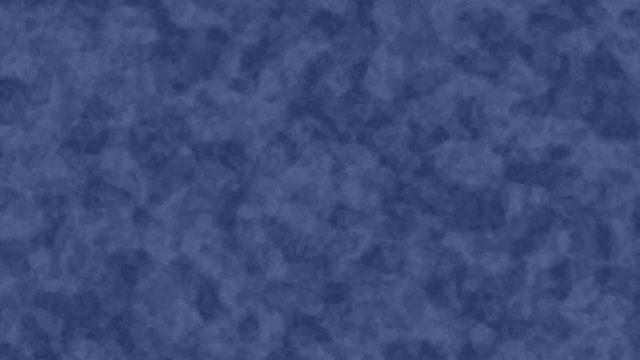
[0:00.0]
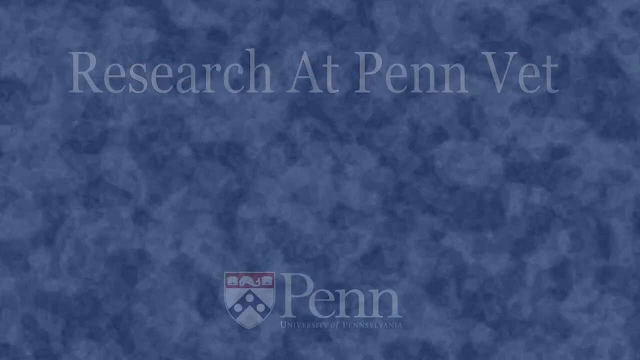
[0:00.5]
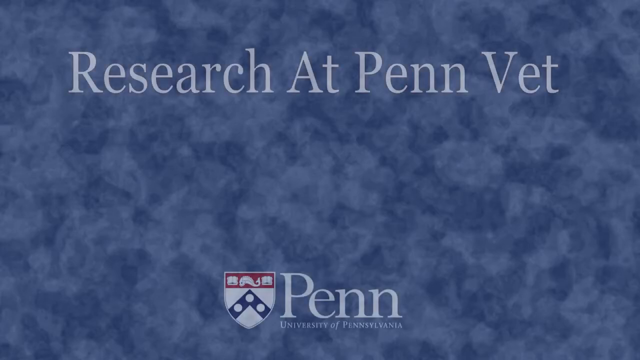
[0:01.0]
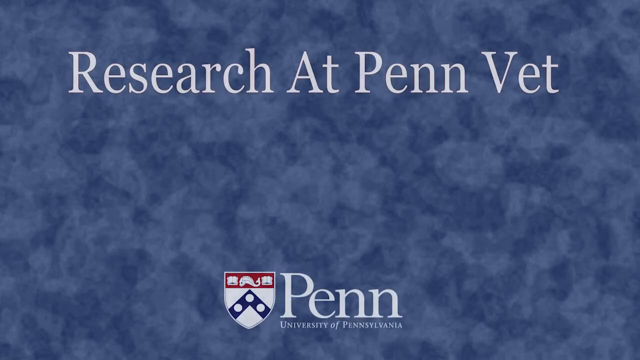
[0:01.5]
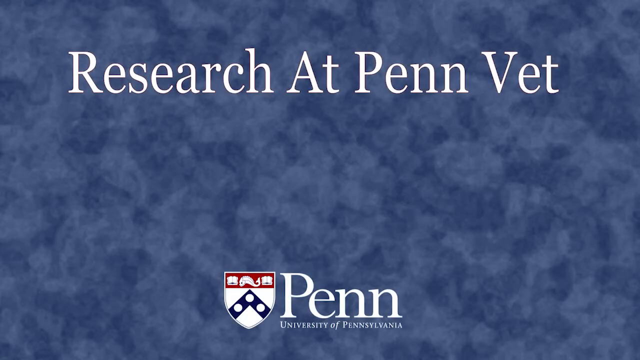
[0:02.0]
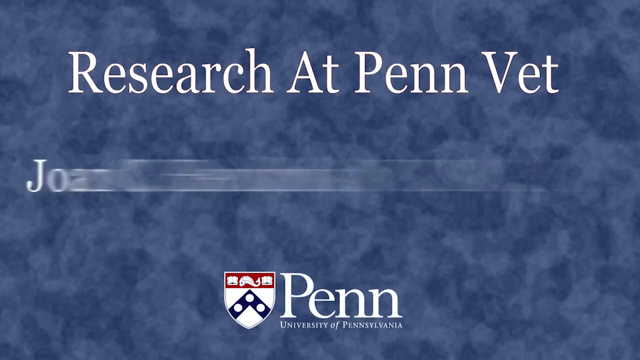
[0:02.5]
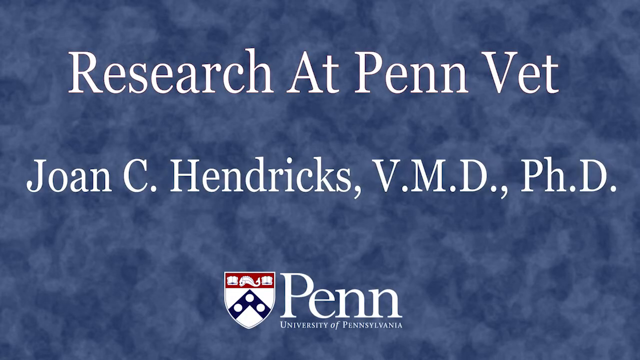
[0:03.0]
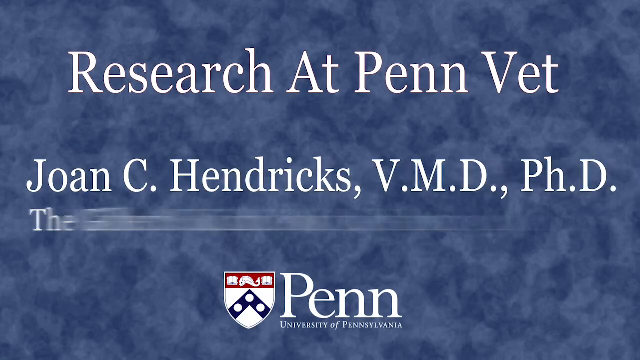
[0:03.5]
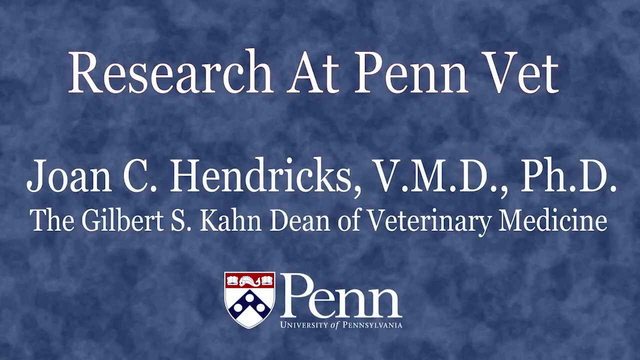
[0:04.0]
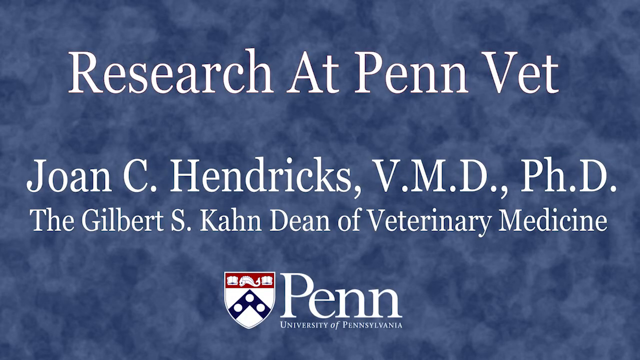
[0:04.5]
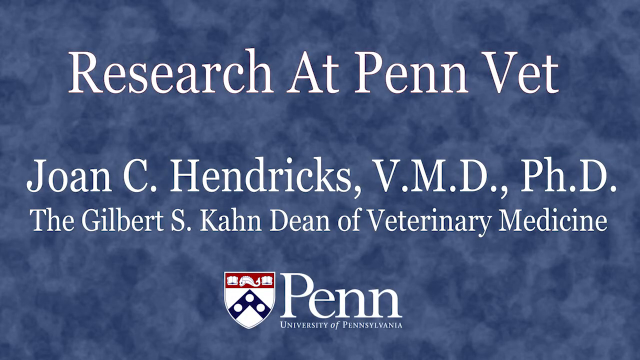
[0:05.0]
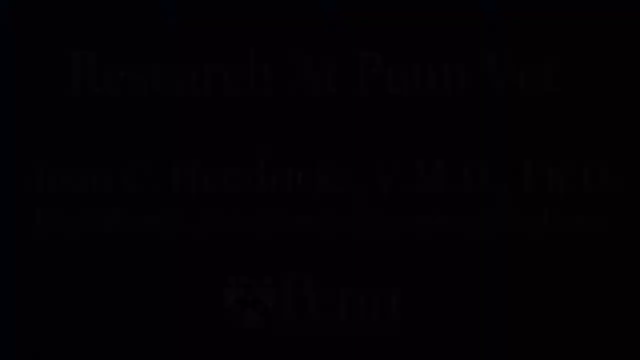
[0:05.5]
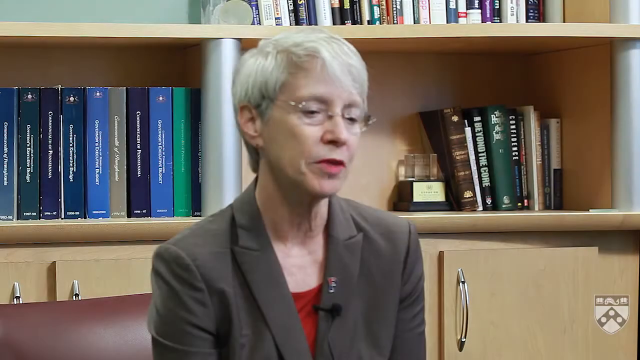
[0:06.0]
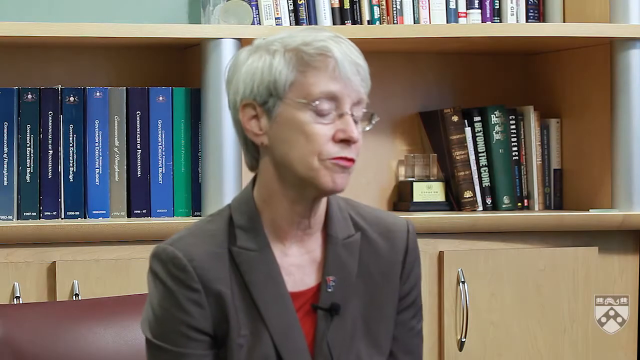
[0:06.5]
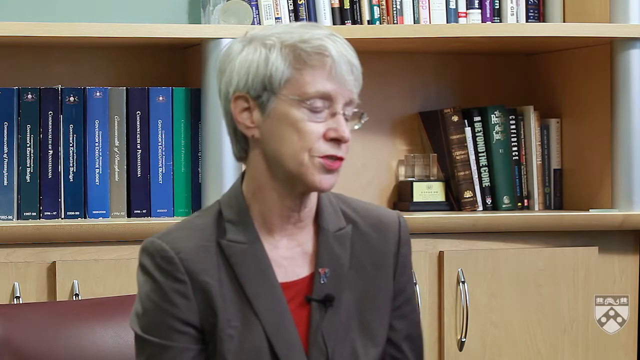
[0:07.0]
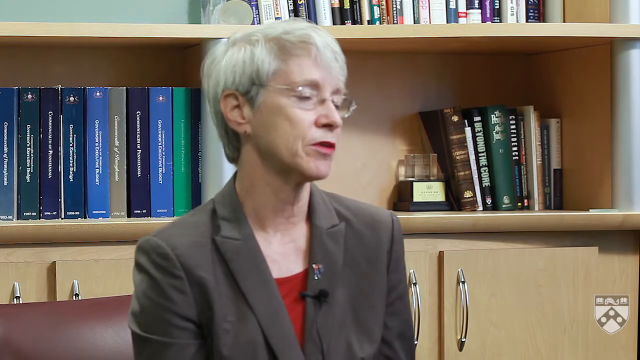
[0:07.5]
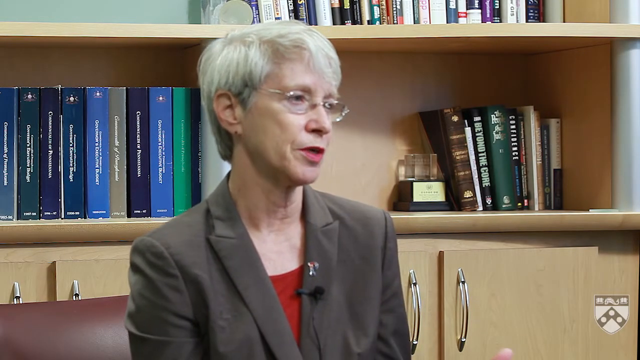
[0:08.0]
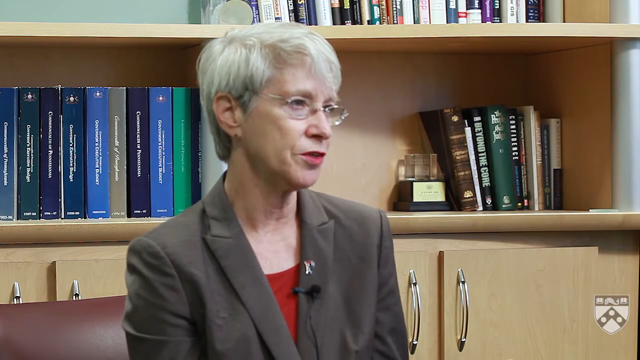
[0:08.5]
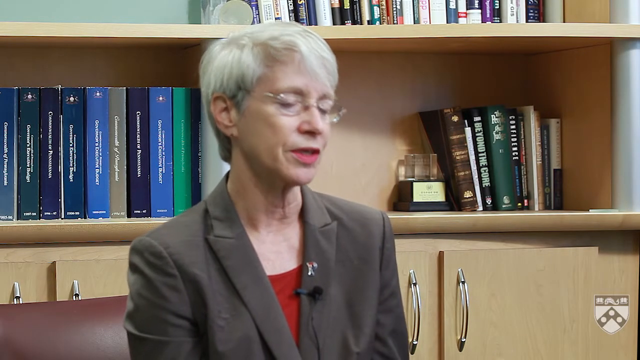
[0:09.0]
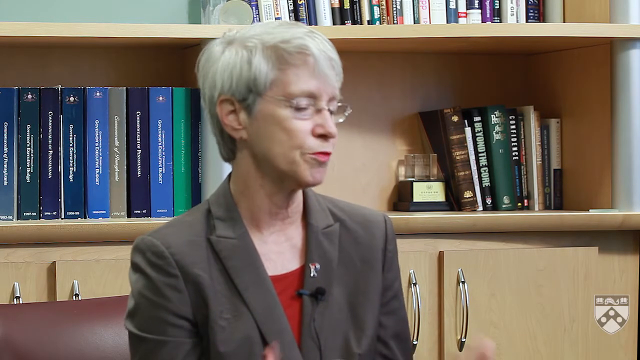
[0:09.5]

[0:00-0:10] The video opens with white words on a blue background that read "Research at Penn Vet, Joan C. Hendricks, VMD, PhD, the Gilbert S. Kahn Dean of Veterinary Medicine," along with the word "Penn." A woman with short grayish-white hair is then shown talking. She sits in front of a library of books, probably in her office, and wears glasses, a red shirt and a brown blazer over it. Behind her are cupboards with silver handles.